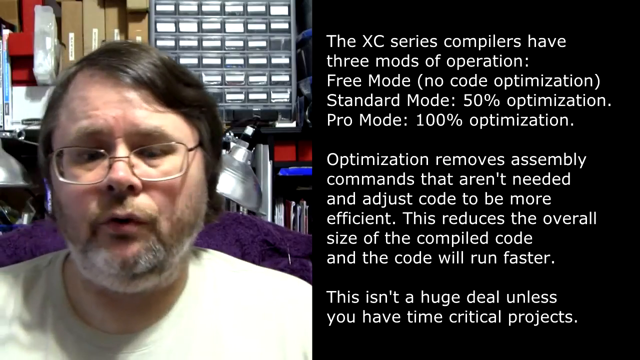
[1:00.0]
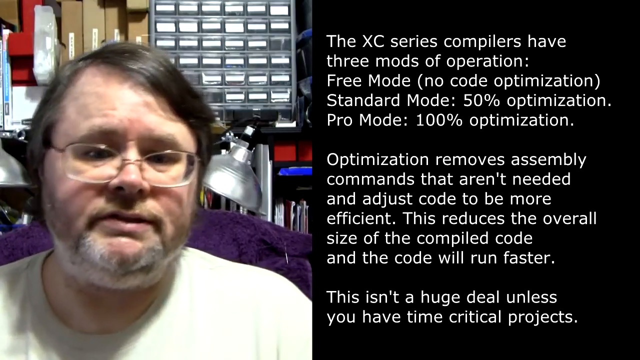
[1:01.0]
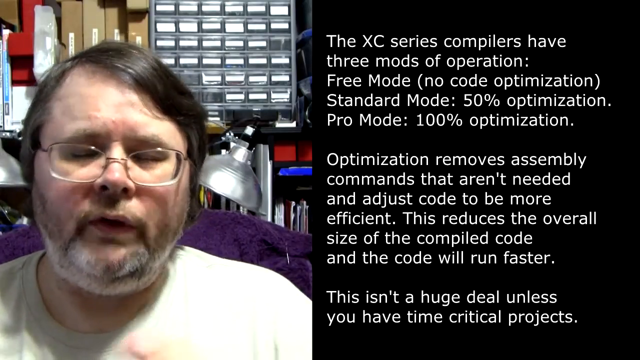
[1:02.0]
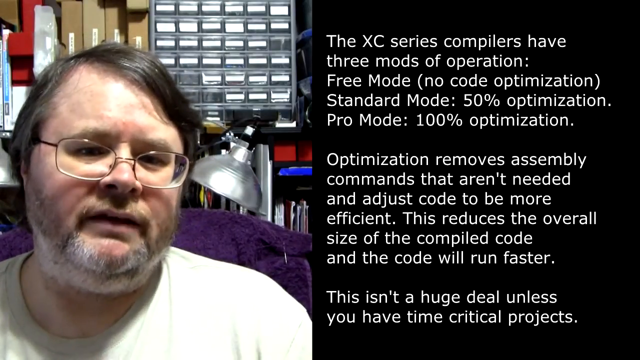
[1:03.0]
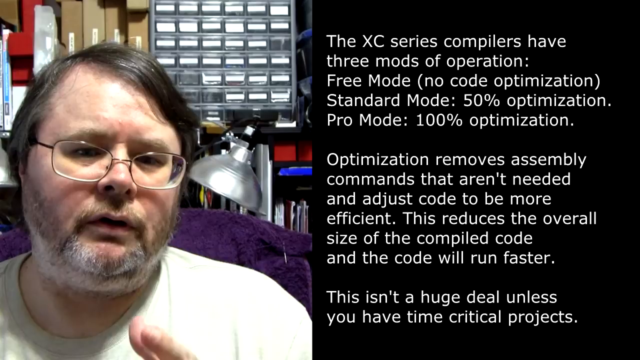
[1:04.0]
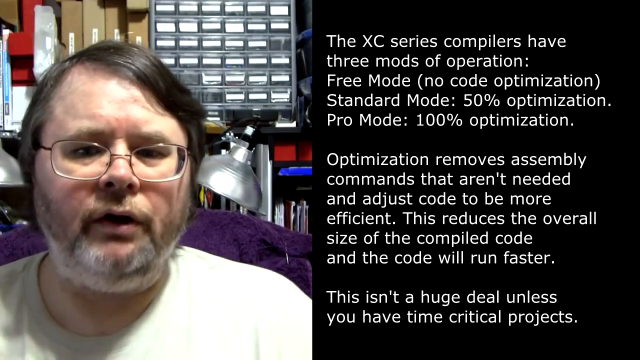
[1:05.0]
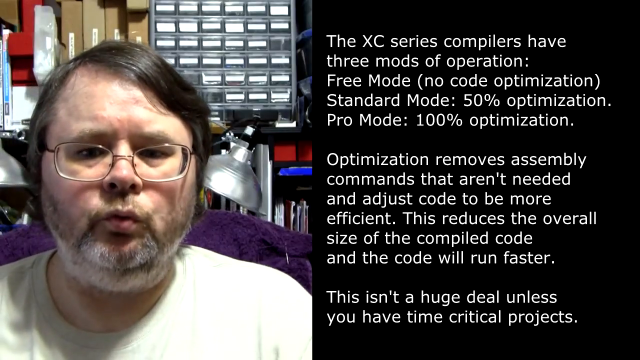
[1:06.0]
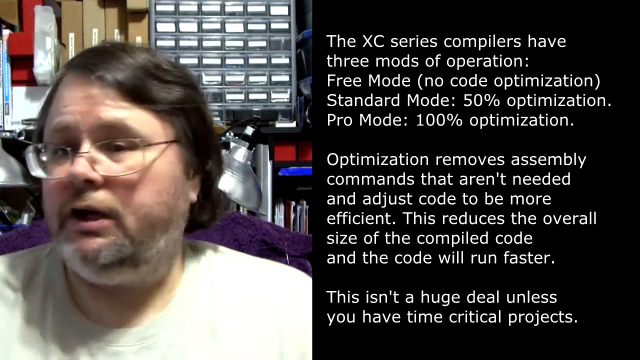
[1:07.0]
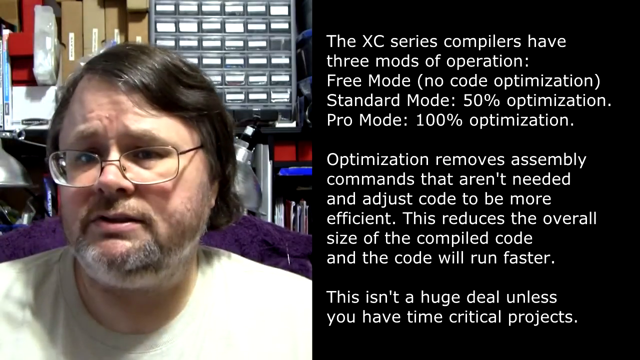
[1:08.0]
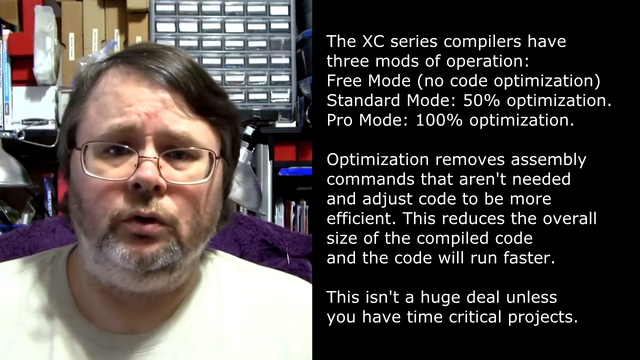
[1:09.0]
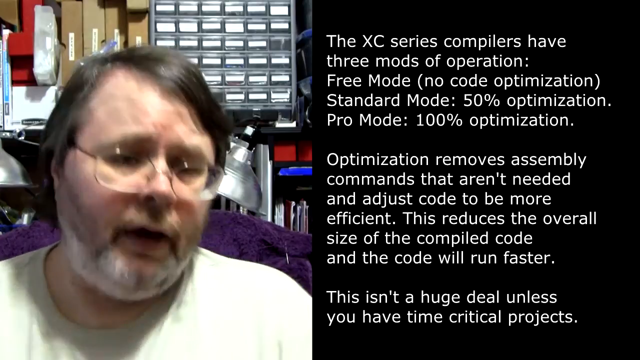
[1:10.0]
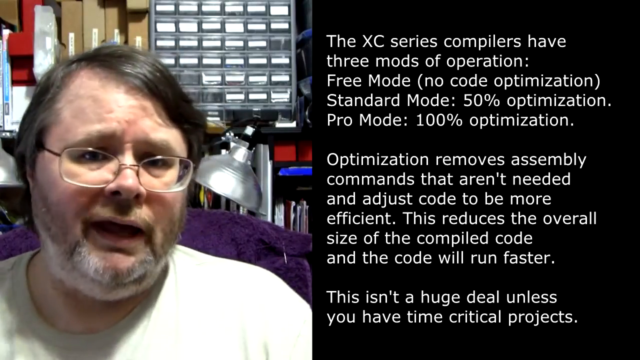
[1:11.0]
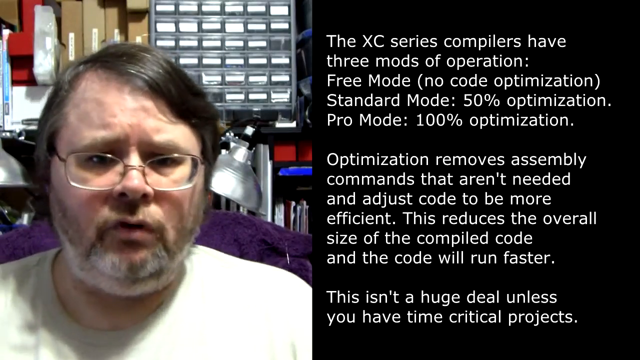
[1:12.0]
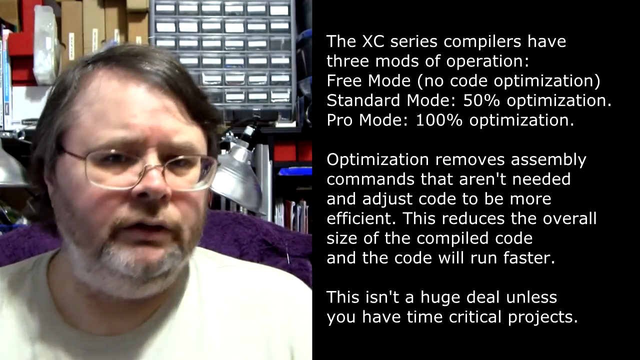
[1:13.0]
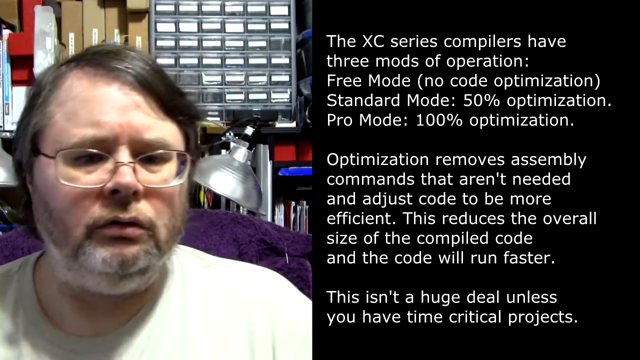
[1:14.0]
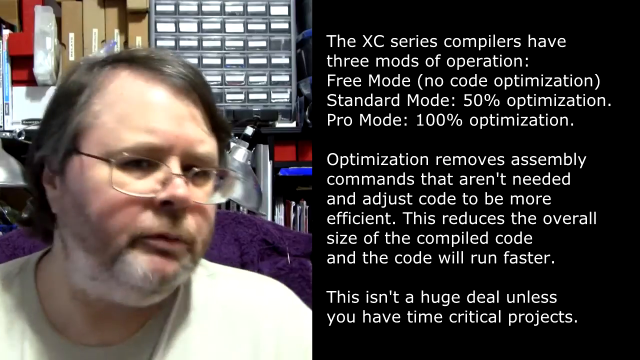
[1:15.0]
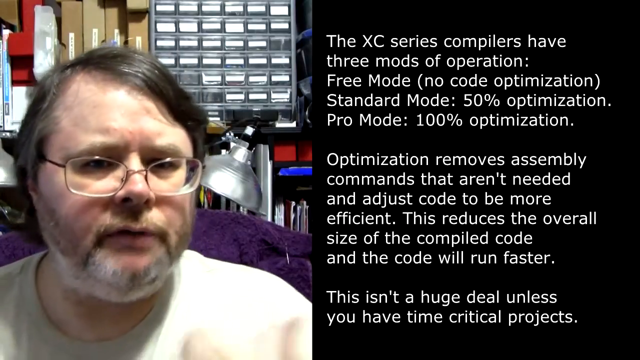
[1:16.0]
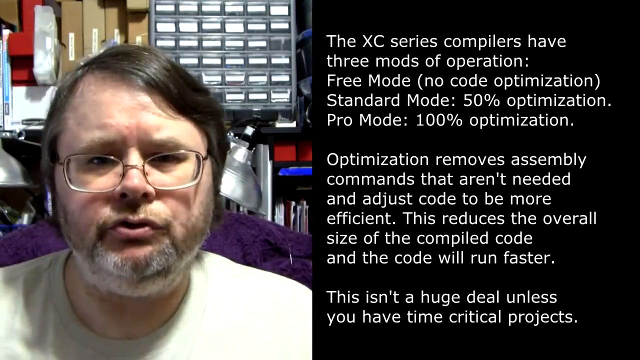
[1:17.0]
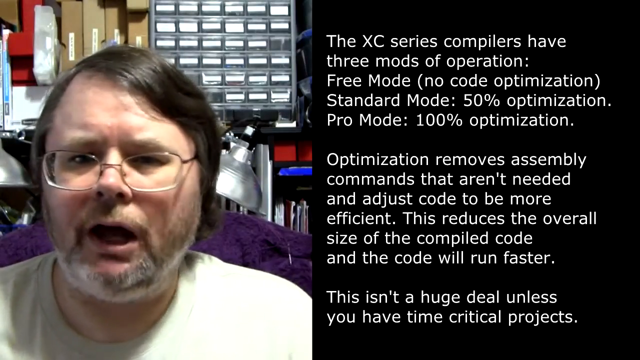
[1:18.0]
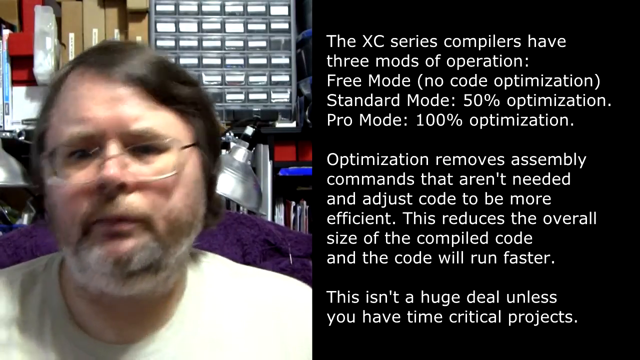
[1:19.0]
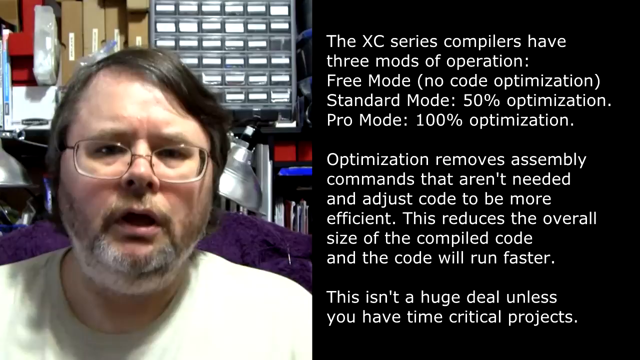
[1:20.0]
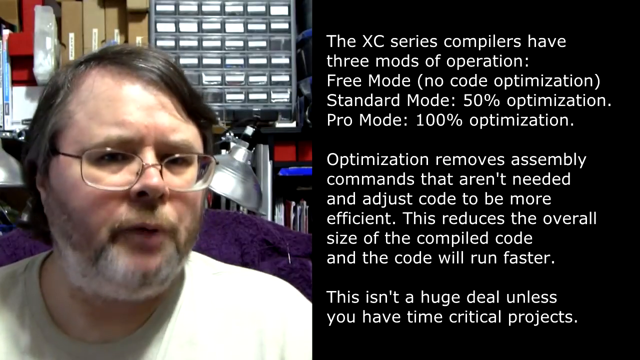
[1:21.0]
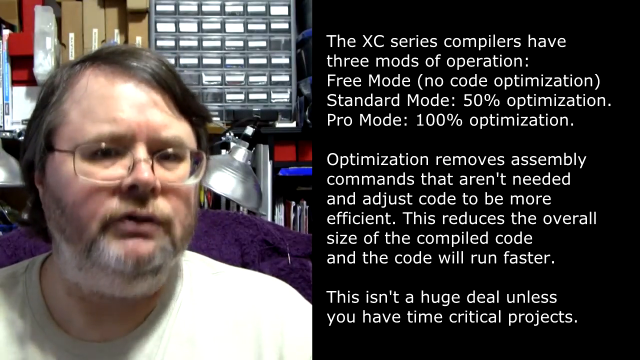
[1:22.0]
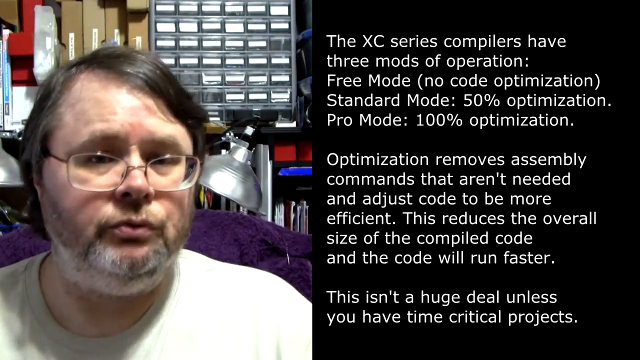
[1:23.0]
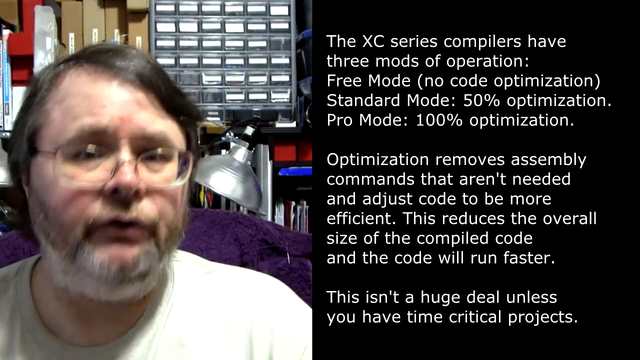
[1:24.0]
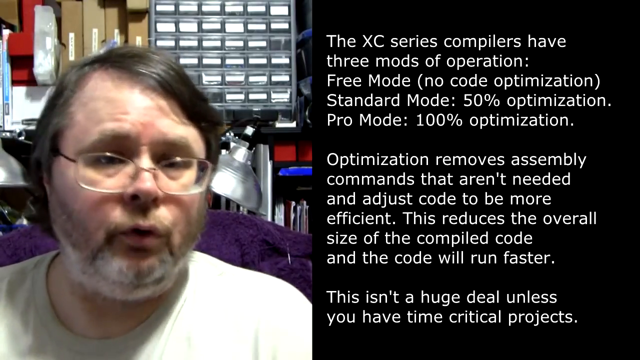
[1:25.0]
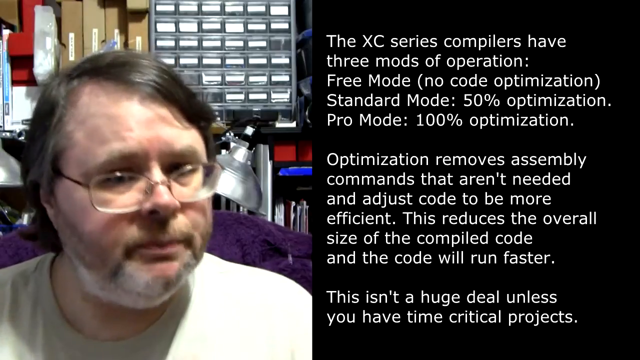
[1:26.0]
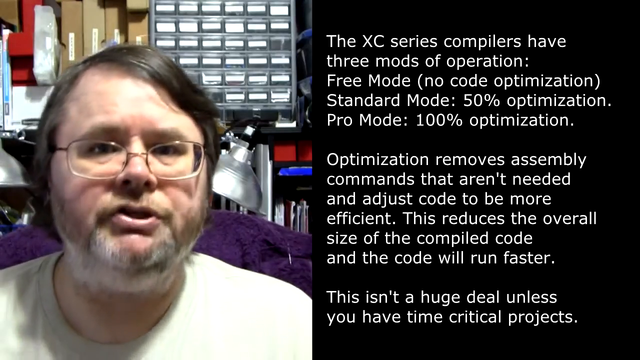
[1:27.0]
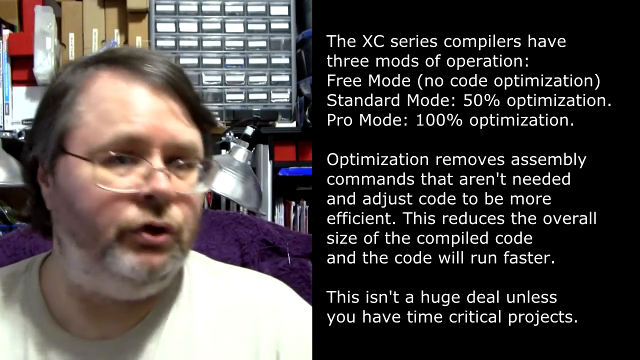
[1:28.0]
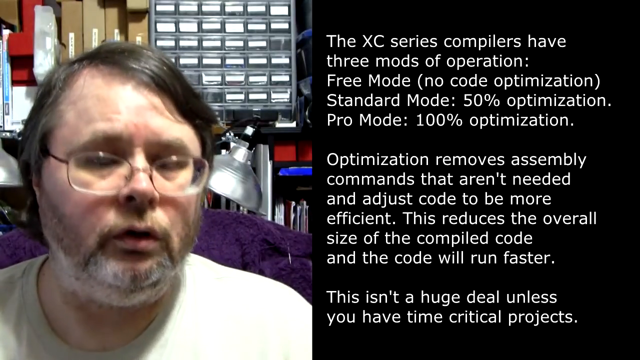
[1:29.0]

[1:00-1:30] The man continues talking into the camera, gesturing ever so slightly toward the camera with his left hand, which appears as the right hand from the viewer's side, so that only his fingers are really visible. The right side of the screen reads, in white: "The XC series compilers have three modes of operation, free mode (no code optimization), standard mode (50% optimization)", followed by a third mode with ": 100% optimization". After a space it reads "optimization removes assembly commands that aren't needed and adjust code to be more efficient. This reduces the overall size of the compiled code and the code will run faster." After another space it reads "This isn't a huge deal unless you have time critical projects." The speaker keeps shifting left and right in his seat as he speaks and gestures with his left hand.